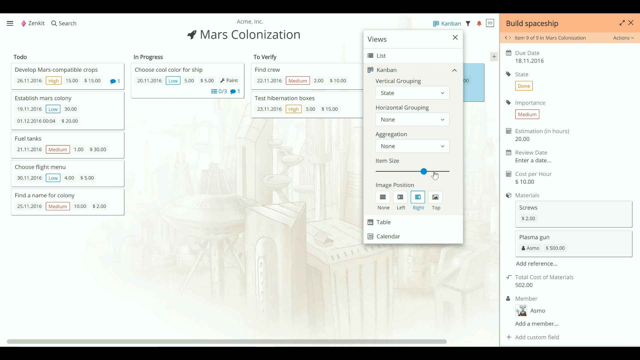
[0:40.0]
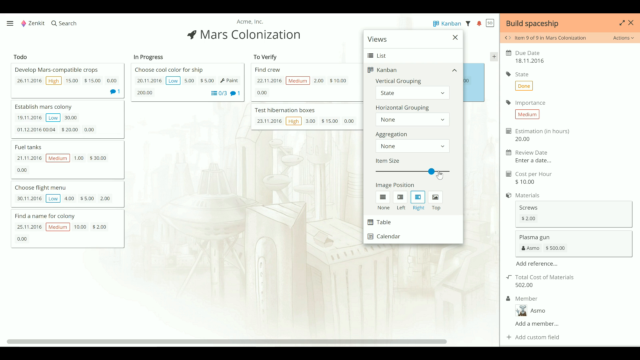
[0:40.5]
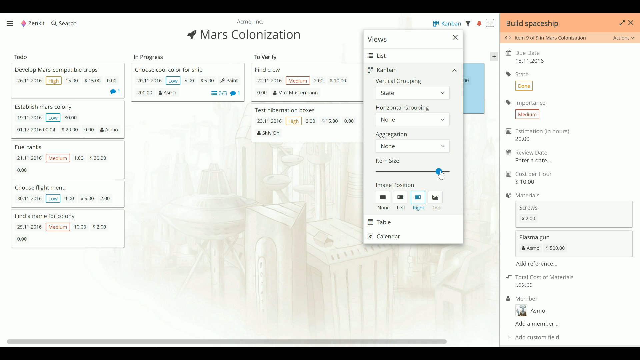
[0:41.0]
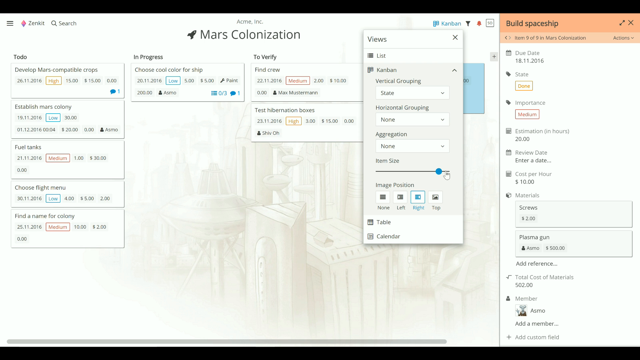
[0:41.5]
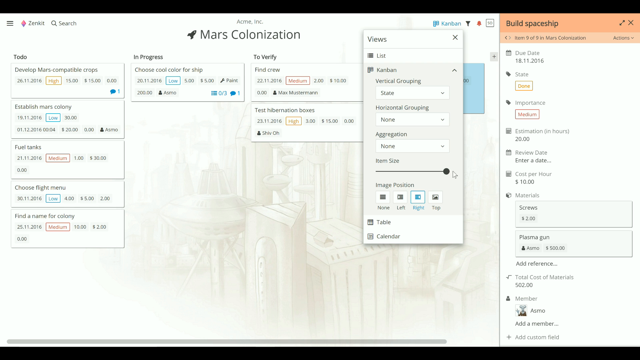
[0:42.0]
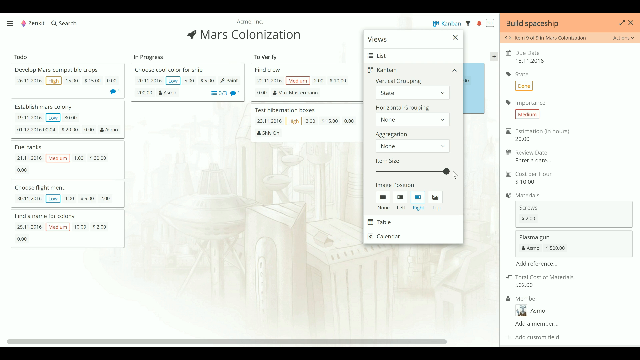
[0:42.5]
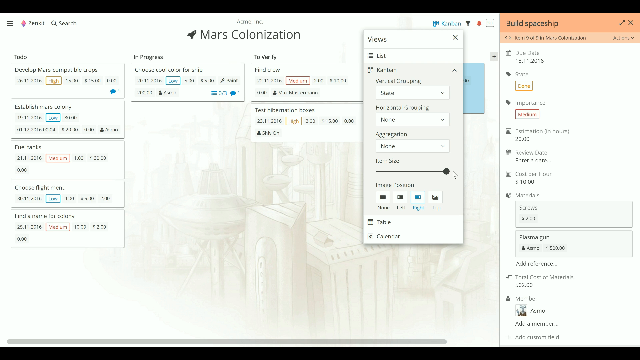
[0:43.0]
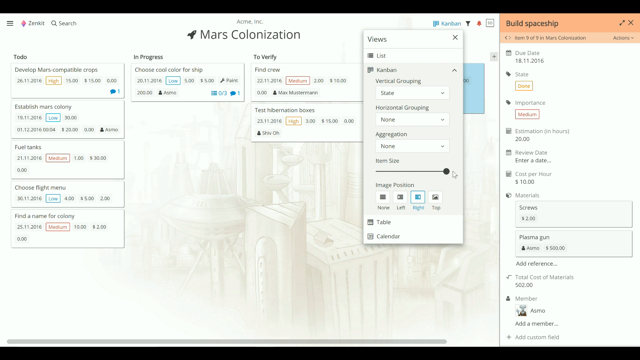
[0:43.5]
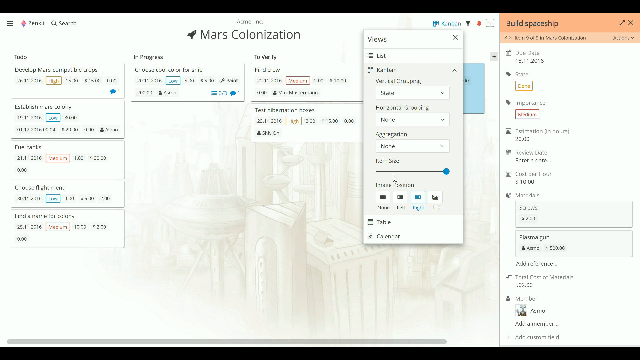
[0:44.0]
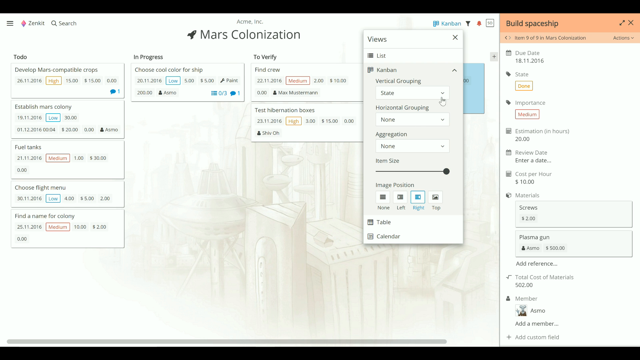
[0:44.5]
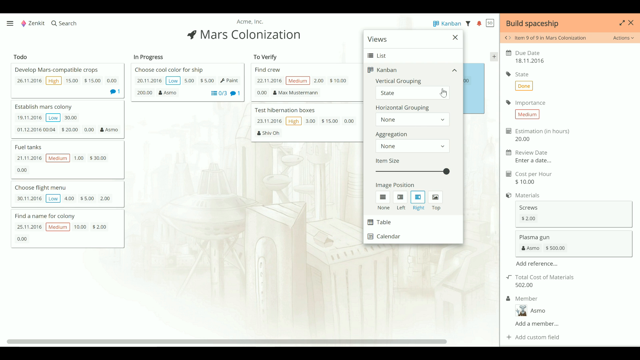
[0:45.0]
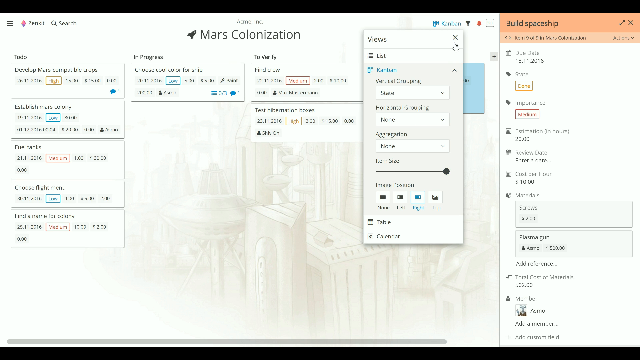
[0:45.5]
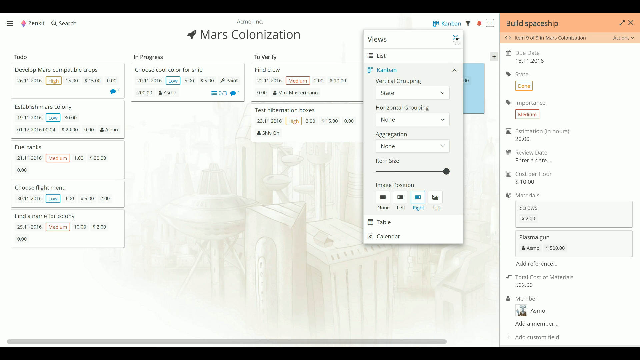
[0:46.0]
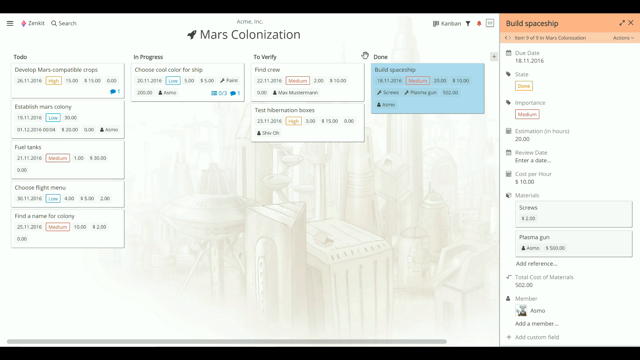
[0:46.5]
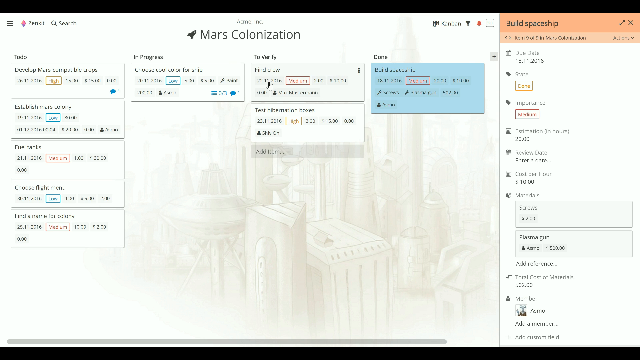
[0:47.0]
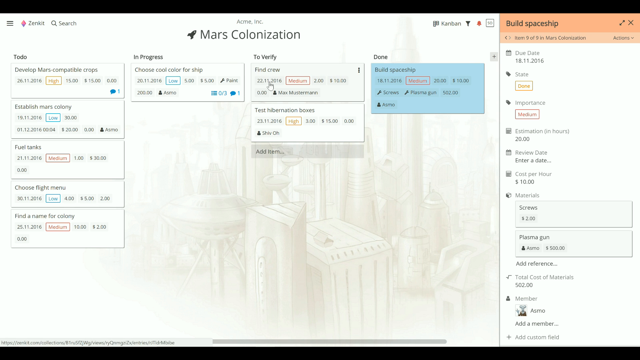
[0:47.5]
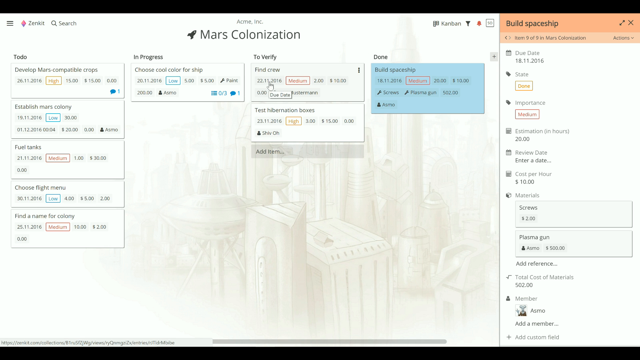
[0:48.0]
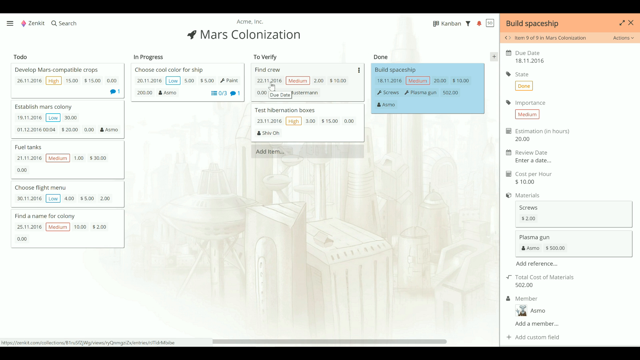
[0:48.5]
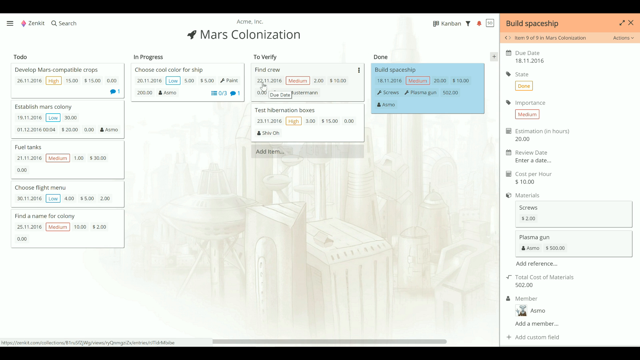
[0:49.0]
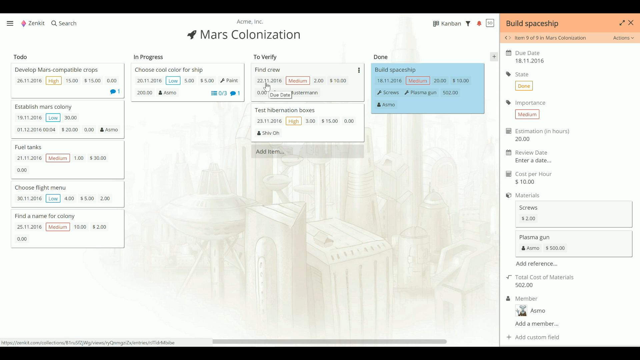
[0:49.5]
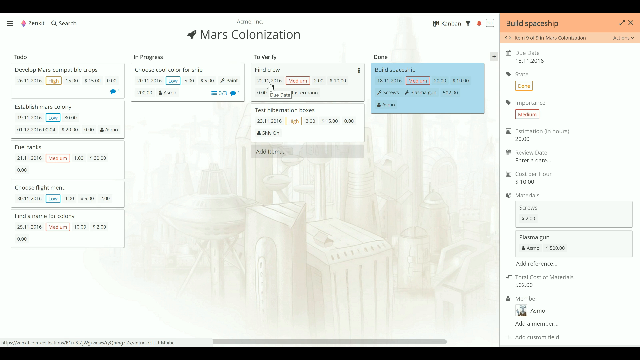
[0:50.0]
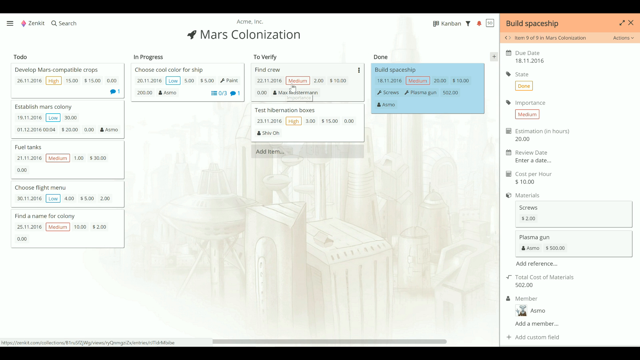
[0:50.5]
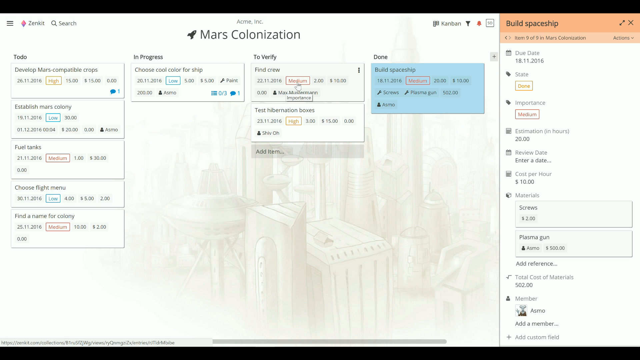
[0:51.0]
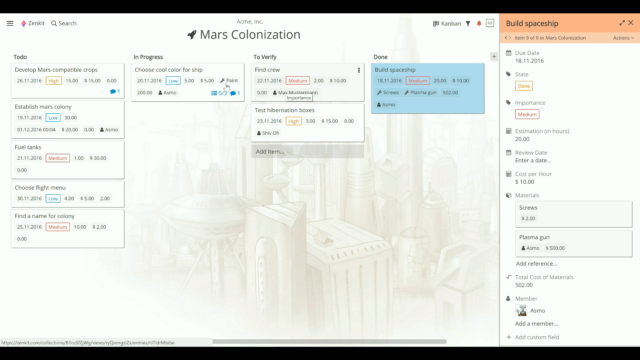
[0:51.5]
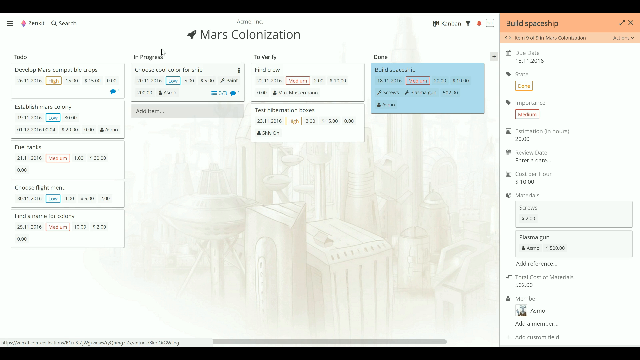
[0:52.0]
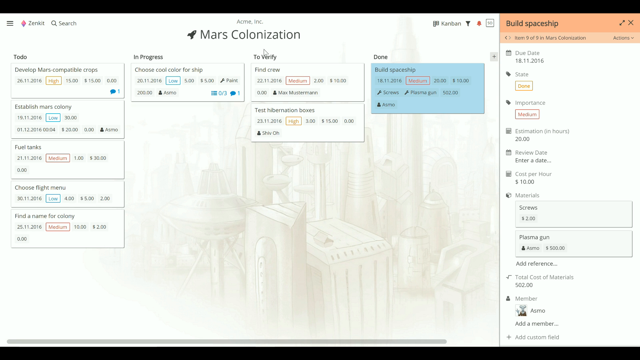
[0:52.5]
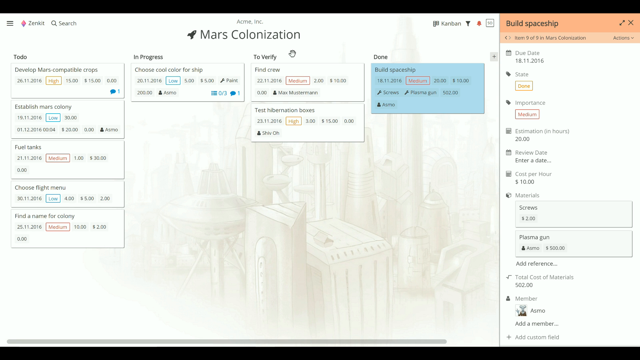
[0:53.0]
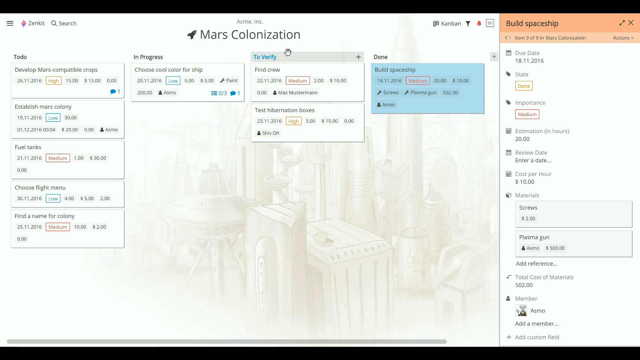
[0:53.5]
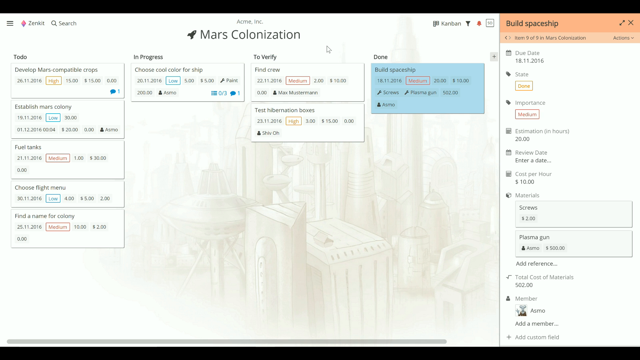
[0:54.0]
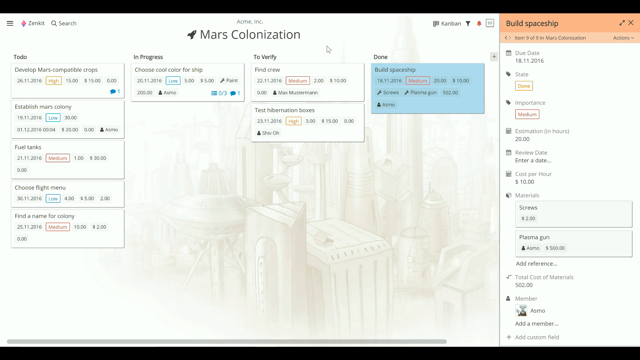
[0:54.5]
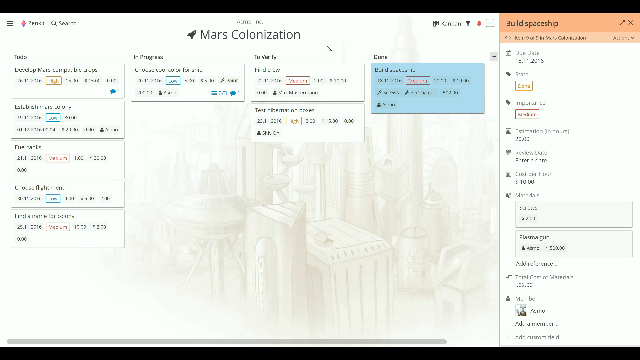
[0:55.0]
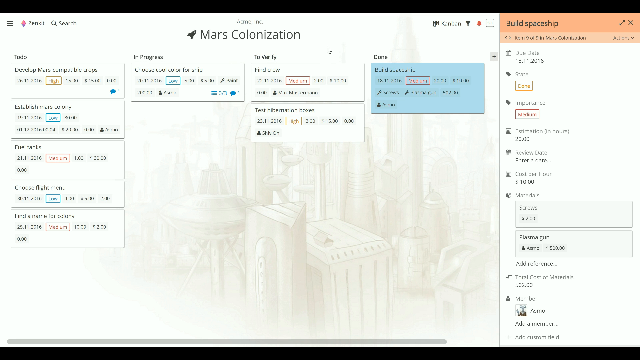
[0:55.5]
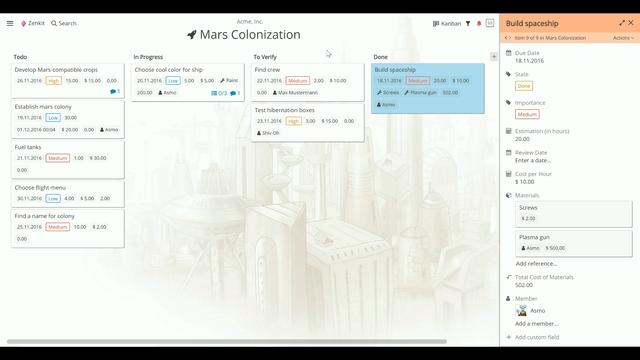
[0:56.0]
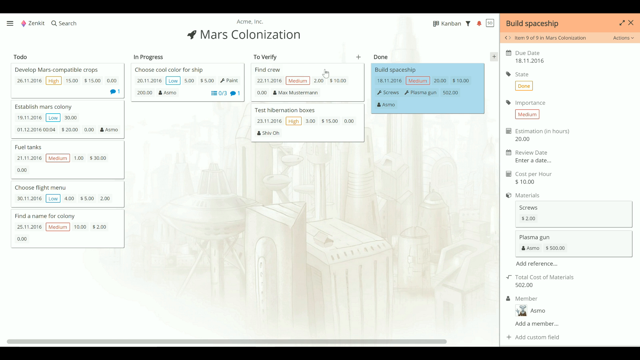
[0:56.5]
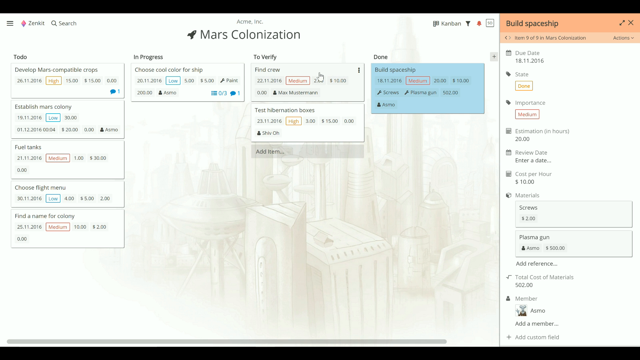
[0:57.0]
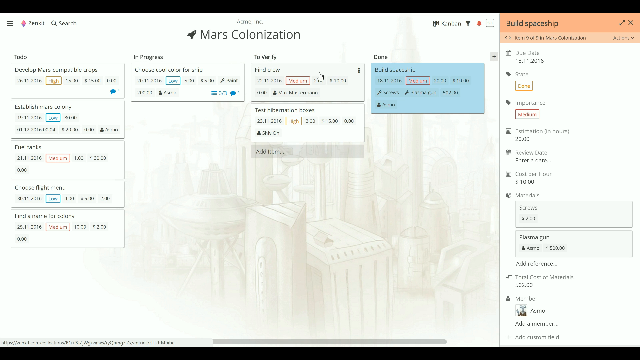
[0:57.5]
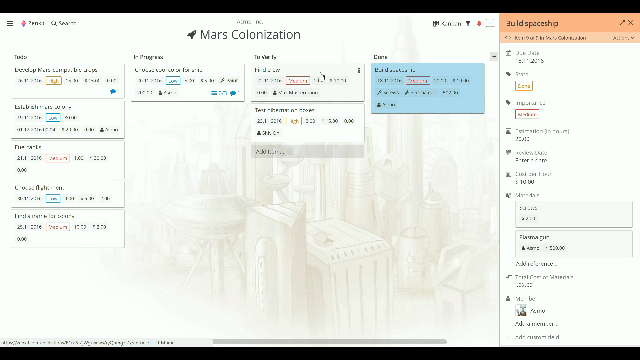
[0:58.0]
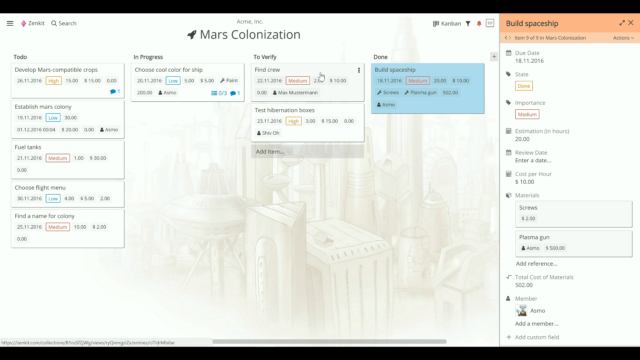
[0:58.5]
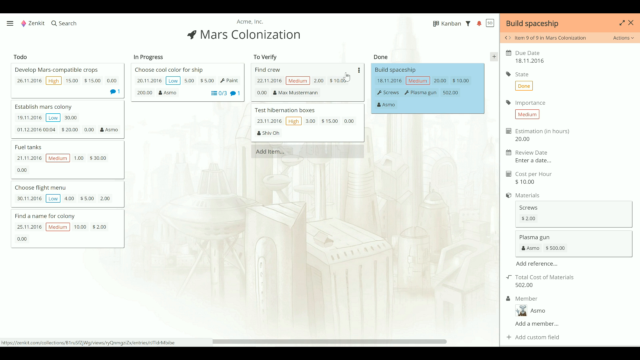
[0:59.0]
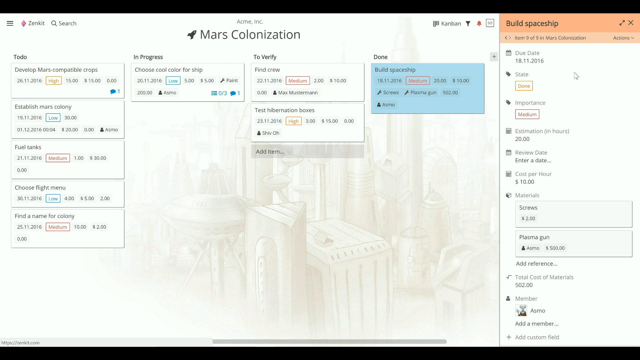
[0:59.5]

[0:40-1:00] The cursor closes the Views pop-up sub-menu, which disappears from the screen, leaving the predominantly white background and the menus under "Mars Colonization". The drop-down menus underneath are "Tools", "In Progress", "To Verify" and "Done". To the right is a standalone white vertical panel with an orange rectangle at the top and "Build spaceship" written inside it in black. The background of the mainly white screen is a very faint graphic rendering of what appears to be a futuristic industrial cityscape. The cursor moves to the box under To Verify for Find Crew and waggles left and right as if to emphasise its location. It is hovering over a box within this section that says "Medium" in red and is outlined in red. The cursor moves above this box, goes back down onto it again, then moves off to the screen.